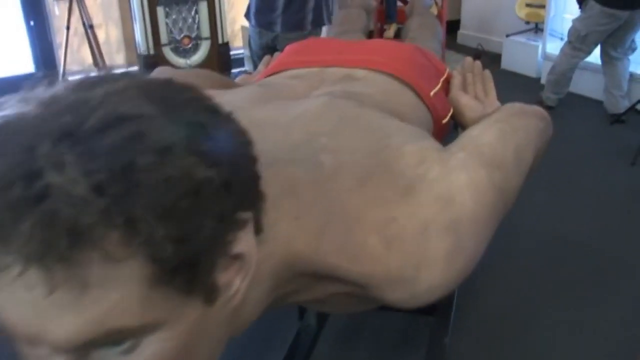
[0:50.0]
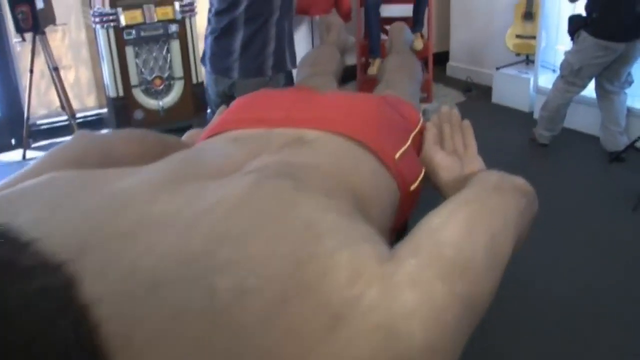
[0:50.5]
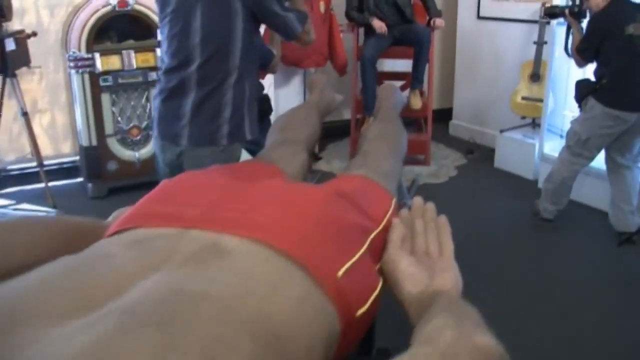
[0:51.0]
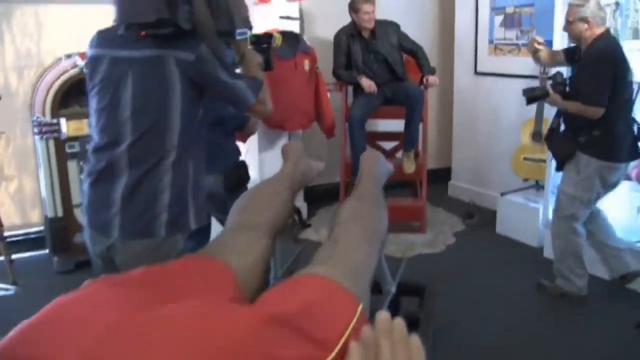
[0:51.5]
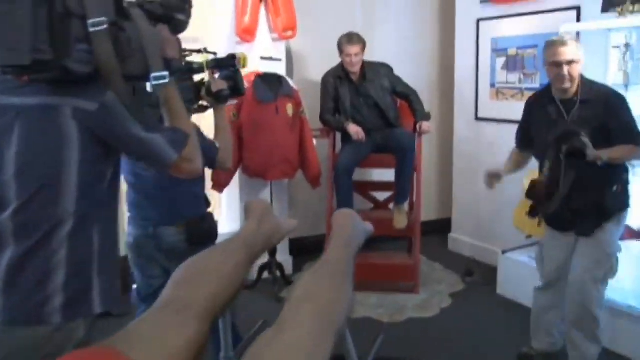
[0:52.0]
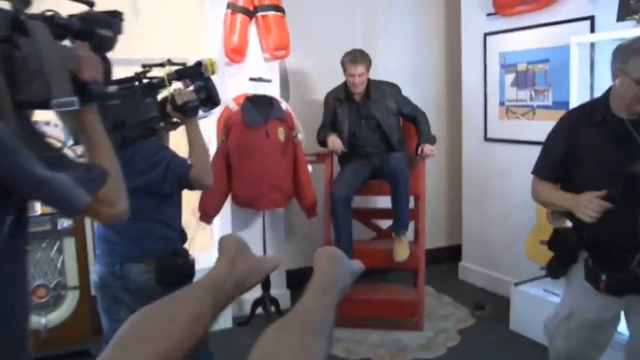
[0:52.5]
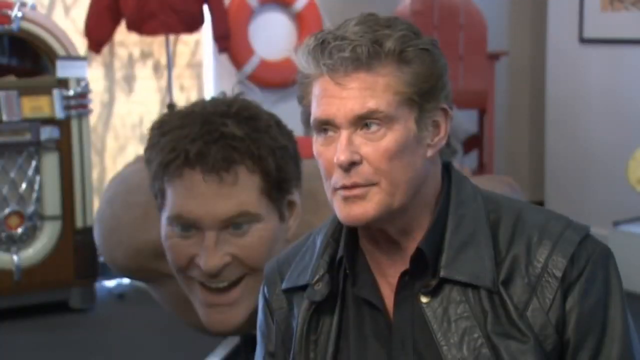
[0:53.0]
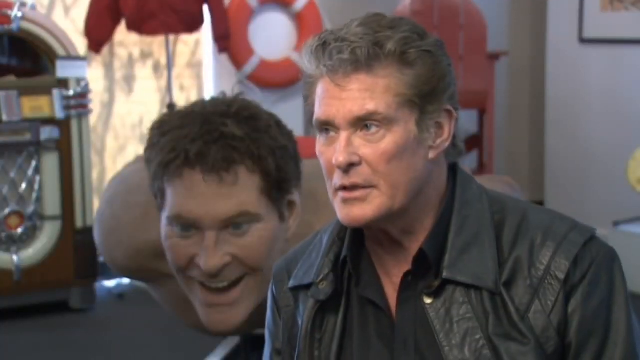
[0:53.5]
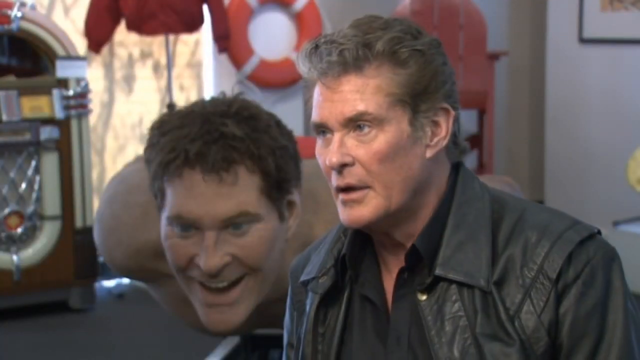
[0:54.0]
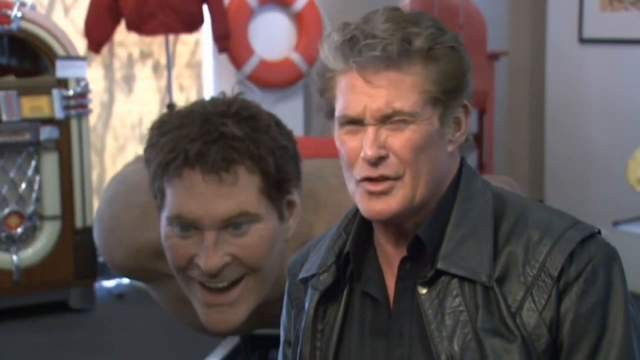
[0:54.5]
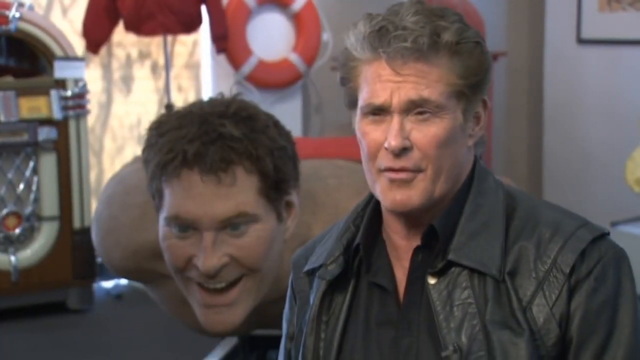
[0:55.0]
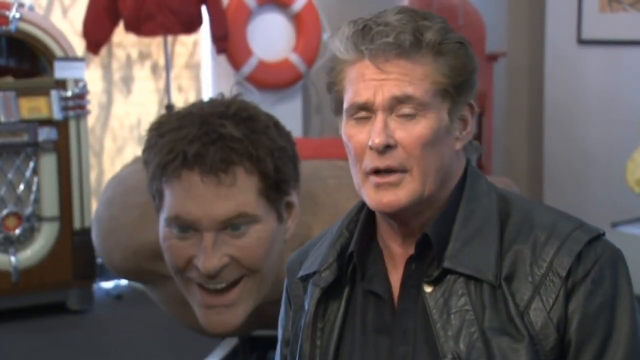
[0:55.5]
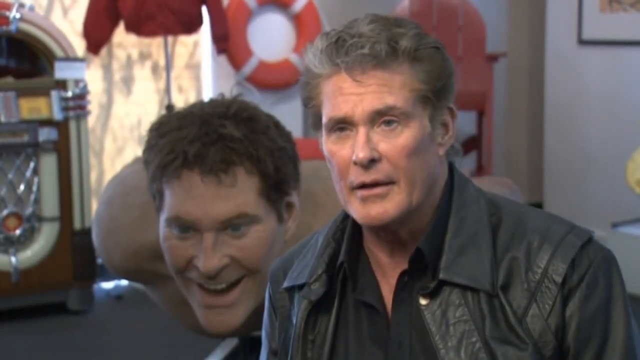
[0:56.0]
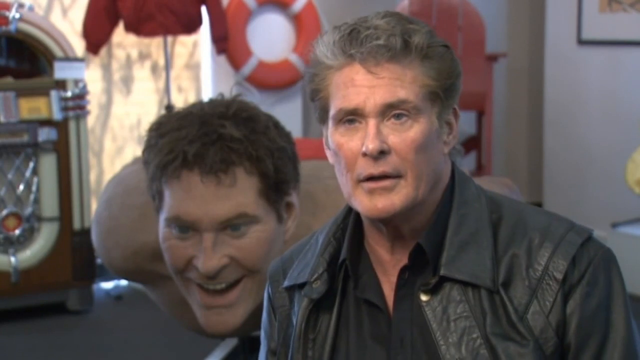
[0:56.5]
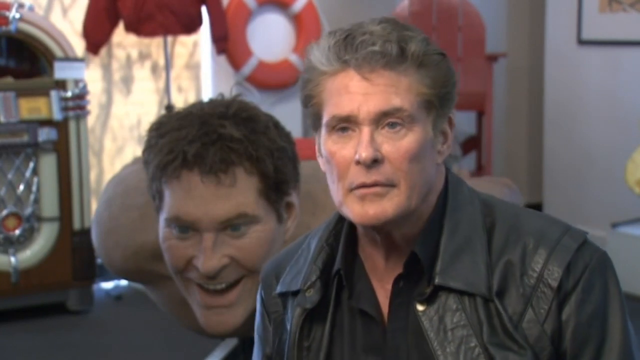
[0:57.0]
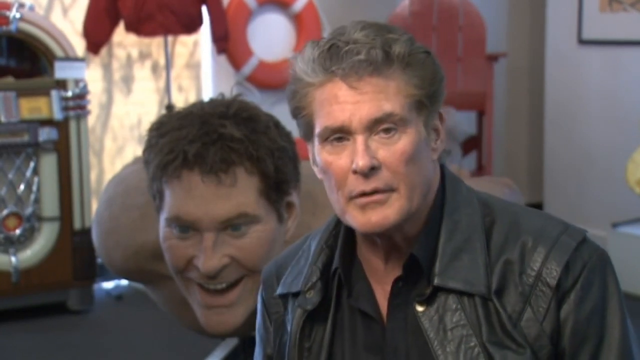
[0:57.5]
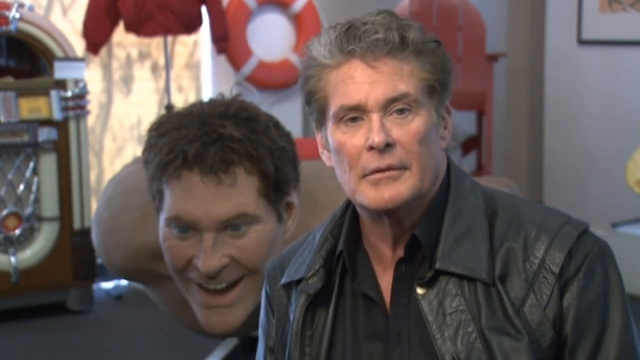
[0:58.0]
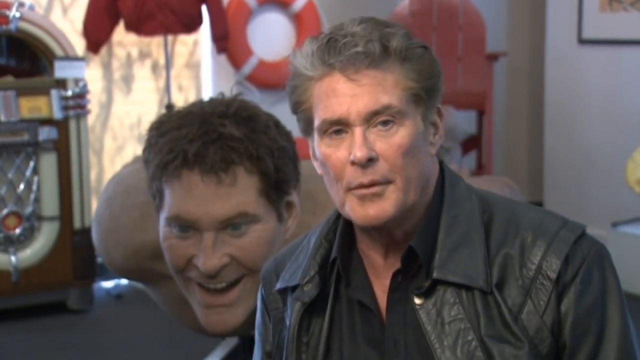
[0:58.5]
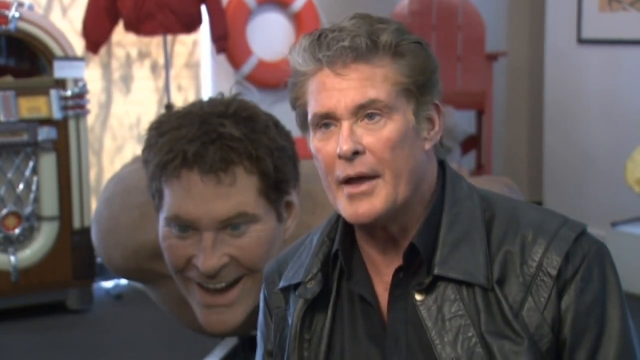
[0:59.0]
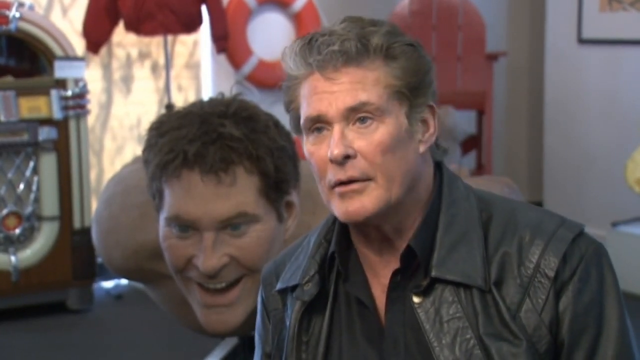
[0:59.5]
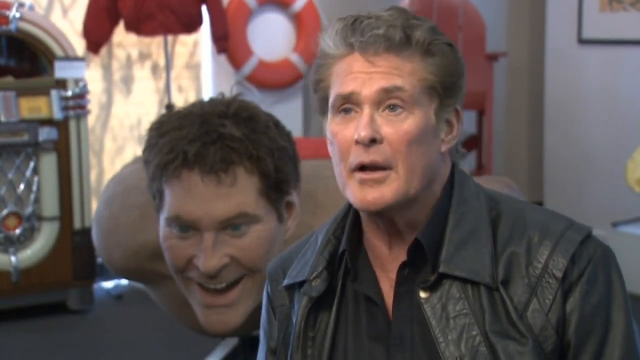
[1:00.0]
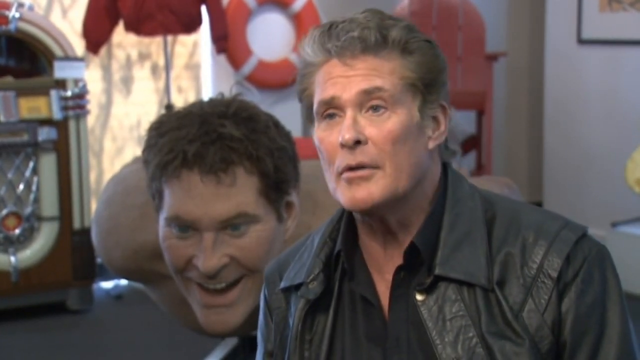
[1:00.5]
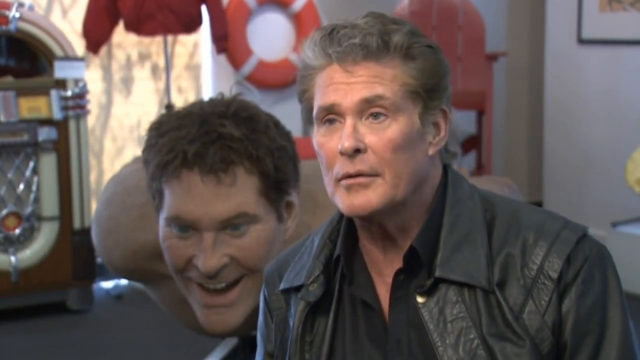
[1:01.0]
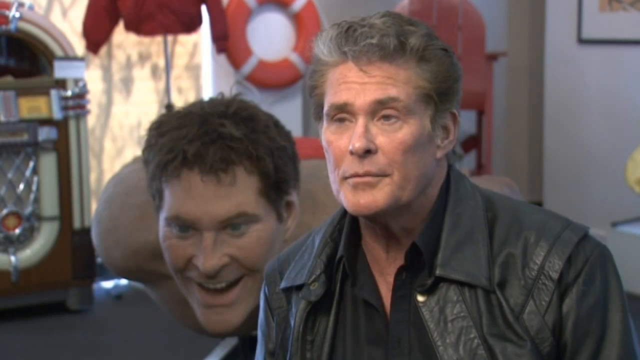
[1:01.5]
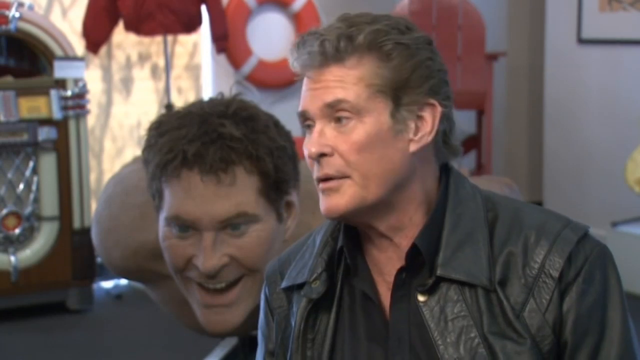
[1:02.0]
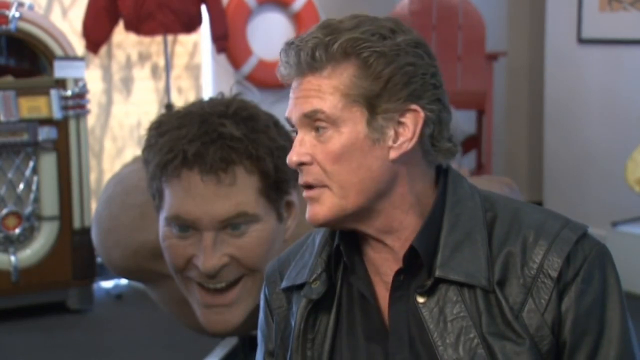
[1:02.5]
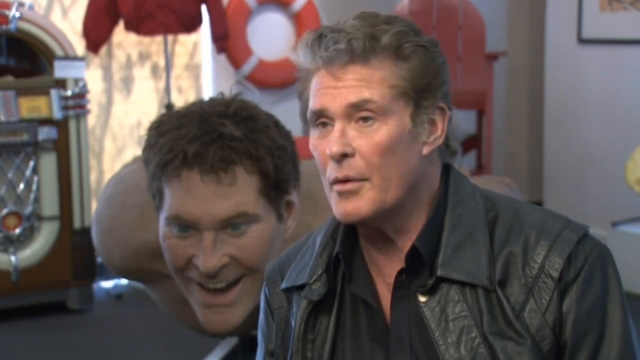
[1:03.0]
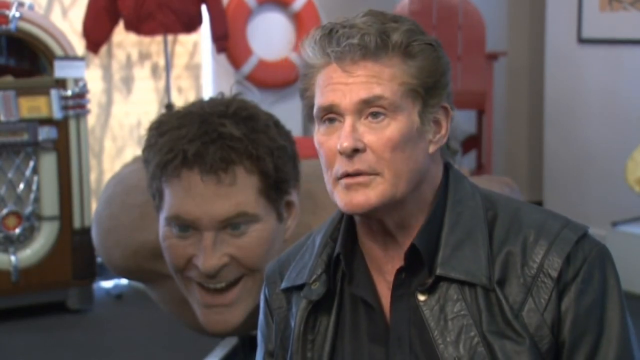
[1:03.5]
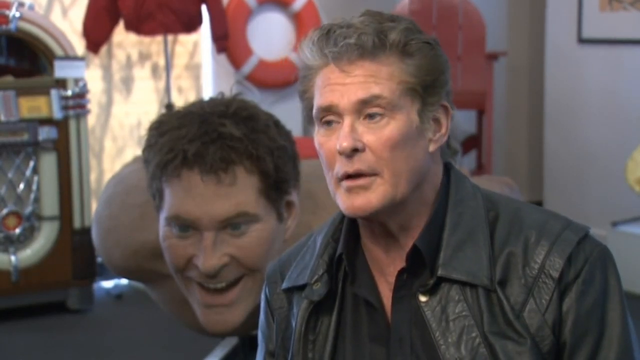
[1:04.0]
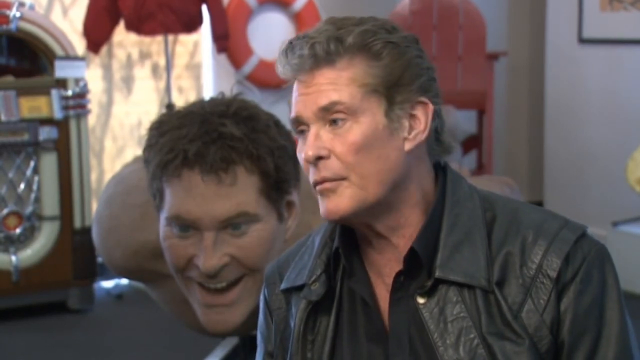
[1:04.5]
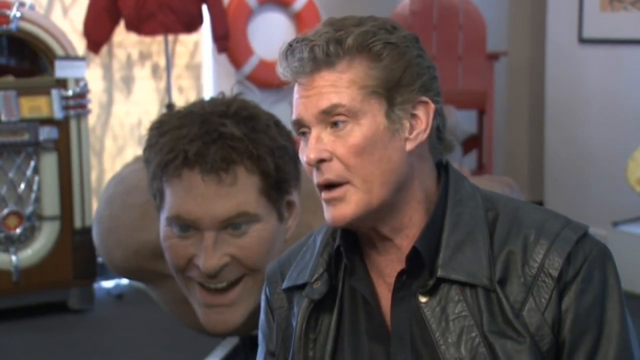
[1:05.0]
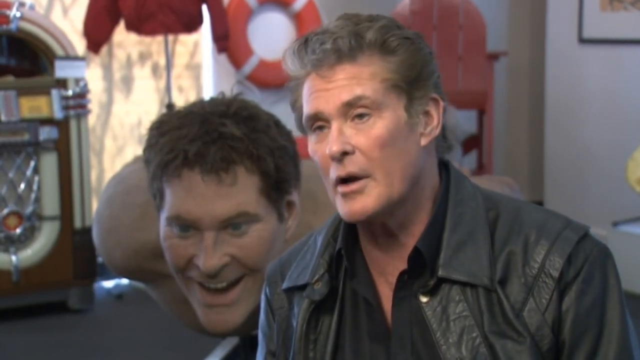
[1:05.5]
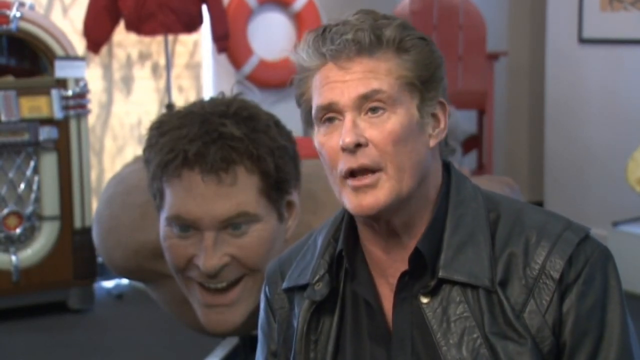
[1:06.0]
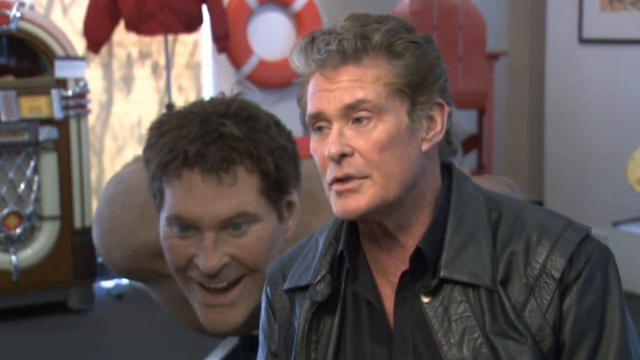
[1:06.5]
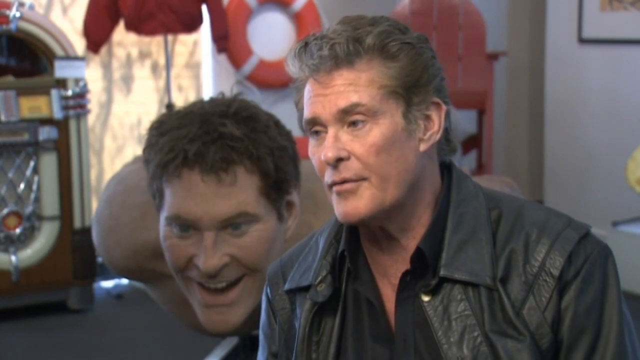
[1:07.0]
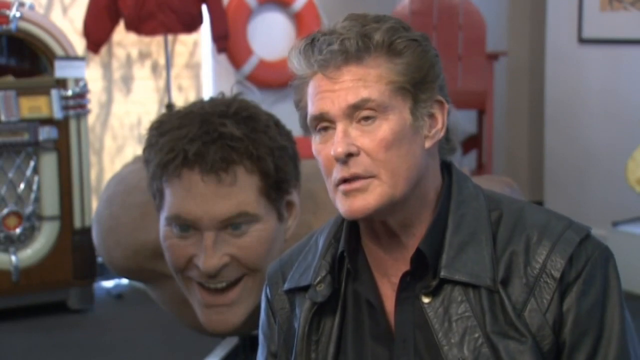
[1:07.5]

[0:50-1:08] The camera pans or tracks forward to David Hasselhoff sitting on the red outdoor chair. On the left, a cameraman films him while another man with a DSLR-type camera moves out of the way of the shot. A head-and-shoulders shot then shows Hasselhoff being interviewed next to his wax figure. His facial expressions change as he speaks: he squints a little, leans forward a little, tilts his head slightly, and looks slightly to the side and down, with a general resting facial expression. He wears a black leather jacket and a black button-down shirt and is in front of the outdoor chair. An orange, Baywatch-colored life preserver ring is mounted on the white wall behind him. On the left of the frame is the jukebox, apparently also being auctioned.